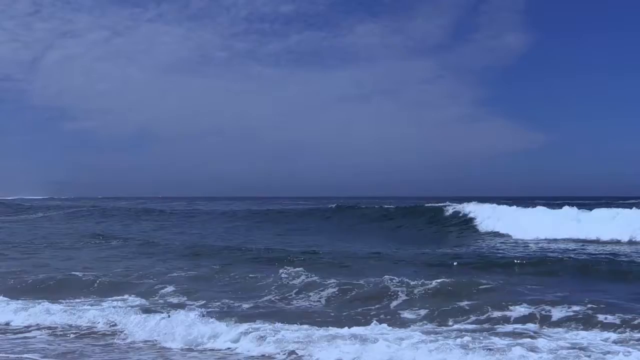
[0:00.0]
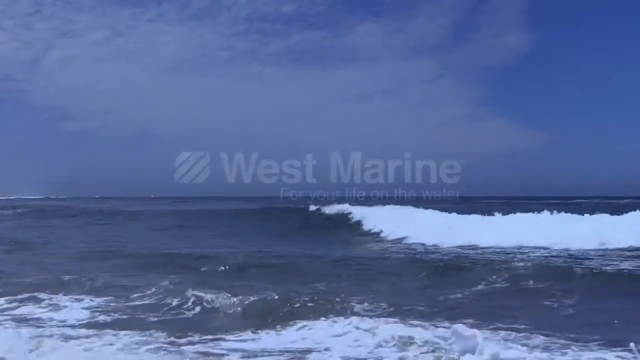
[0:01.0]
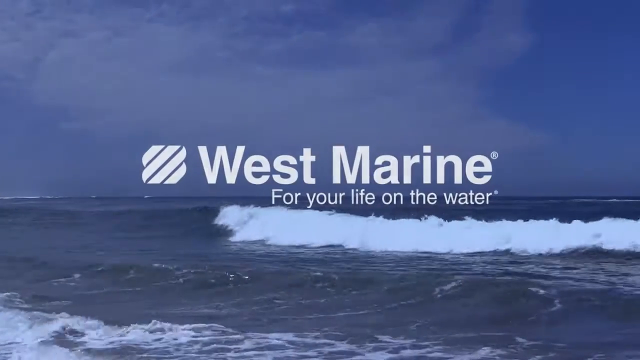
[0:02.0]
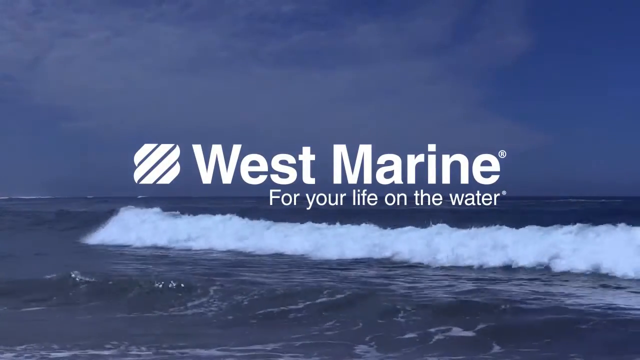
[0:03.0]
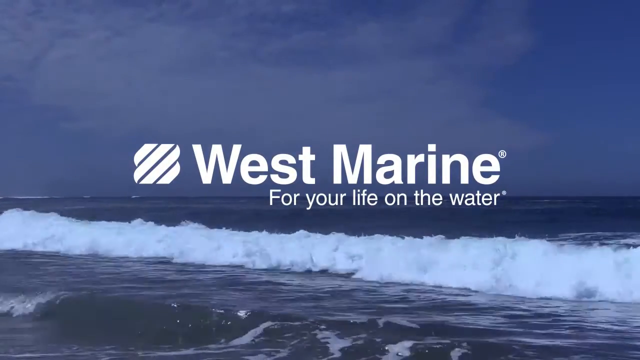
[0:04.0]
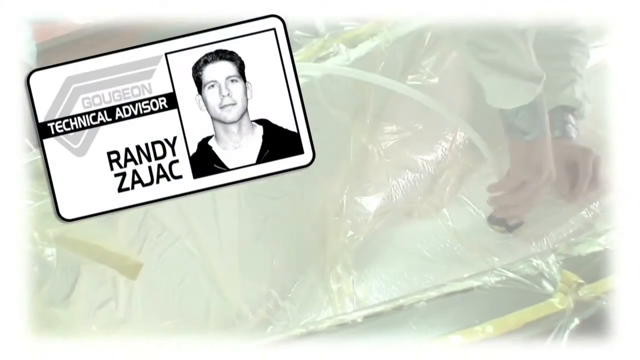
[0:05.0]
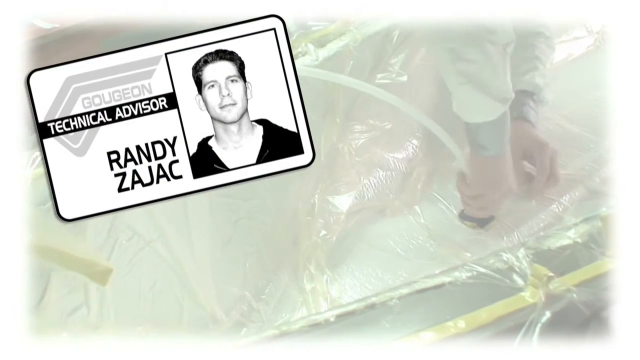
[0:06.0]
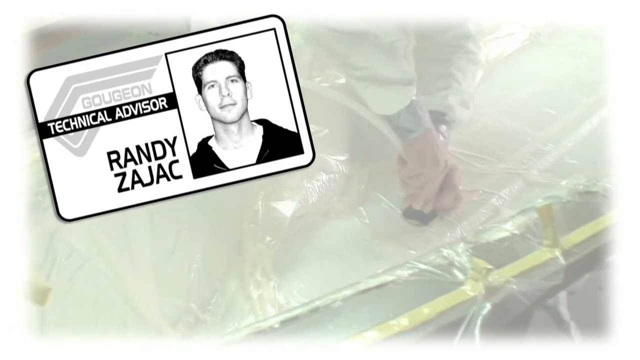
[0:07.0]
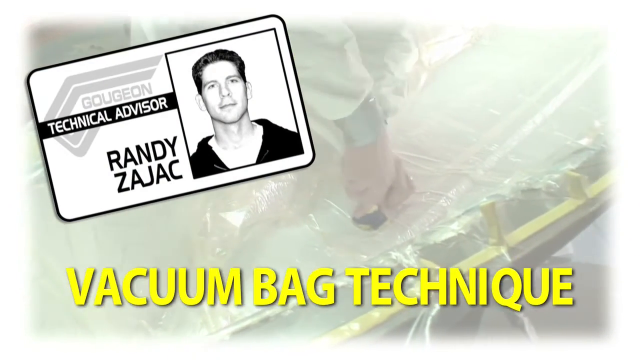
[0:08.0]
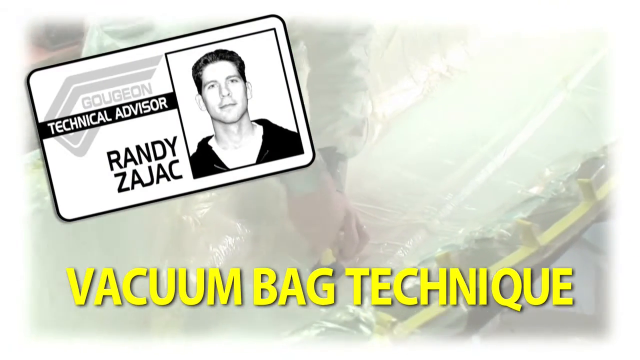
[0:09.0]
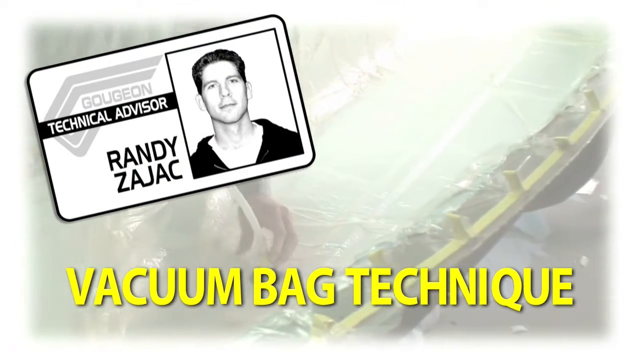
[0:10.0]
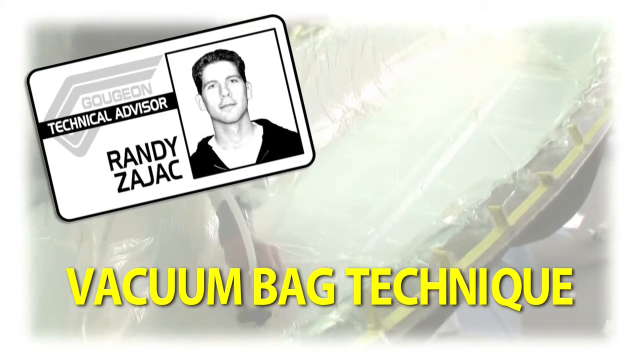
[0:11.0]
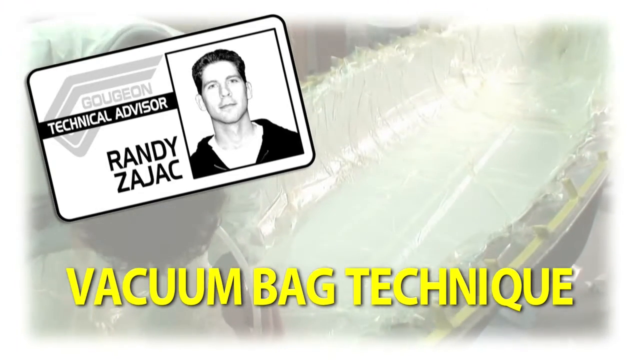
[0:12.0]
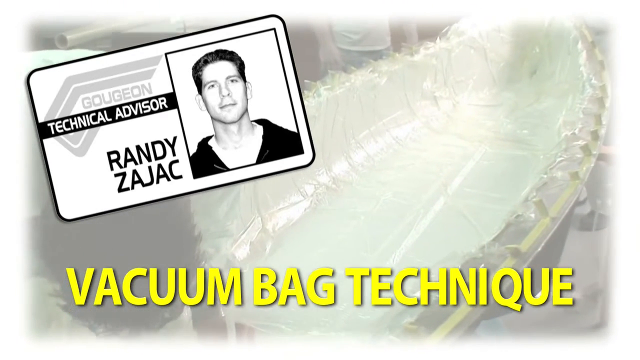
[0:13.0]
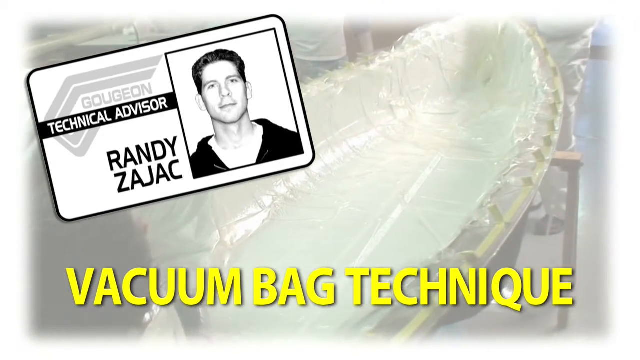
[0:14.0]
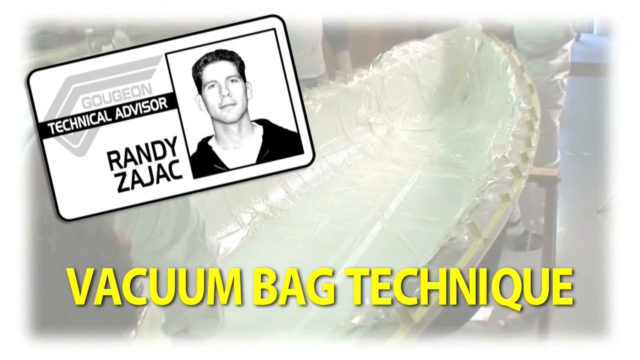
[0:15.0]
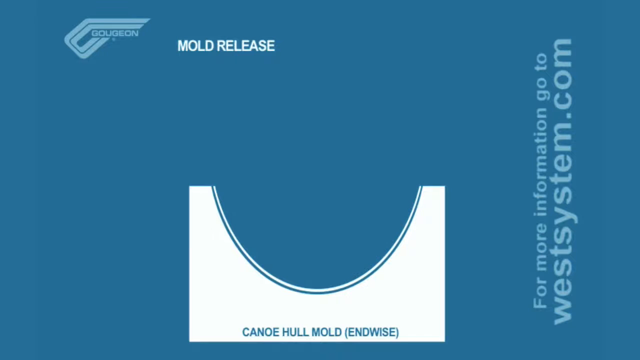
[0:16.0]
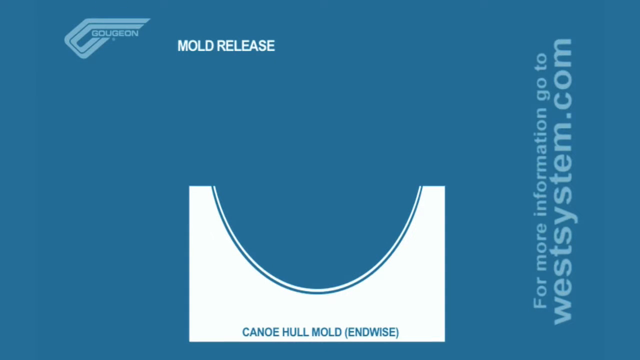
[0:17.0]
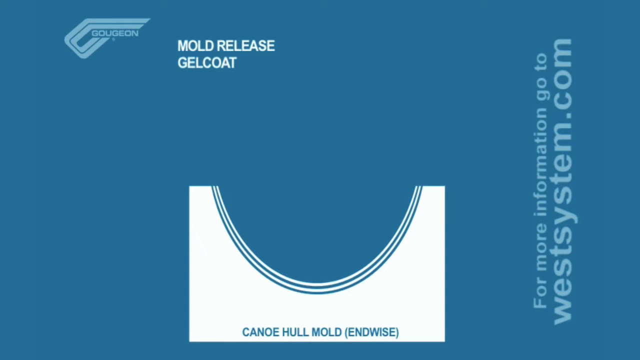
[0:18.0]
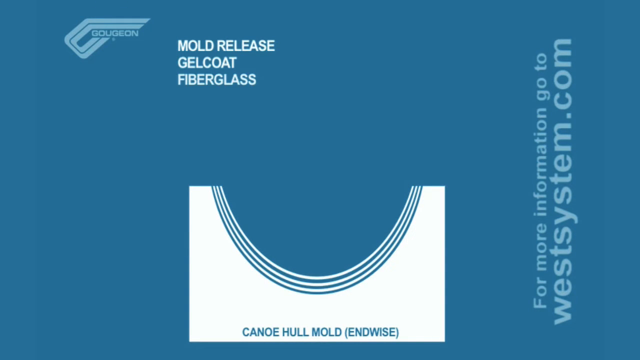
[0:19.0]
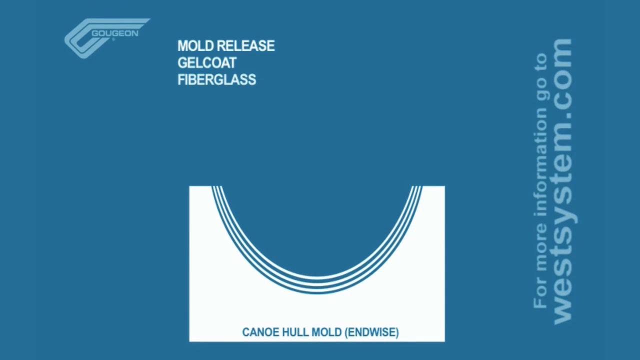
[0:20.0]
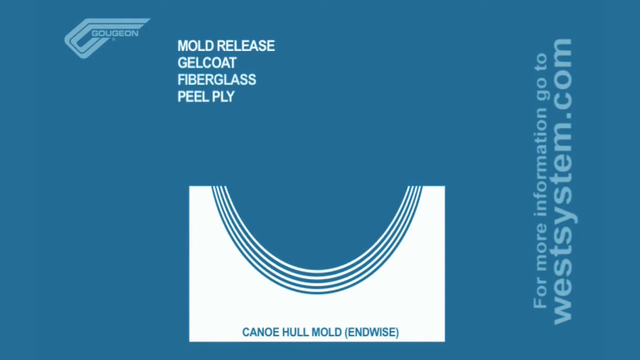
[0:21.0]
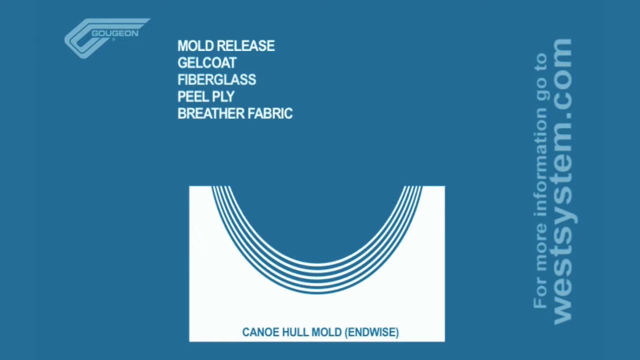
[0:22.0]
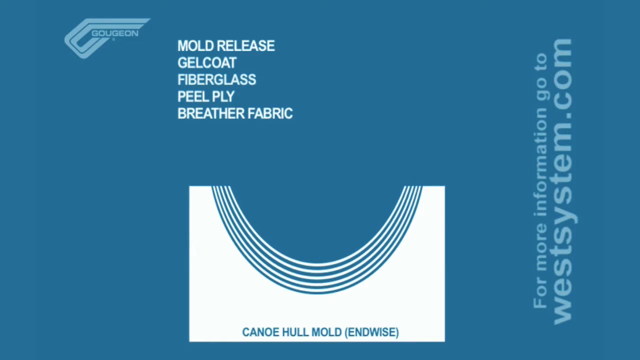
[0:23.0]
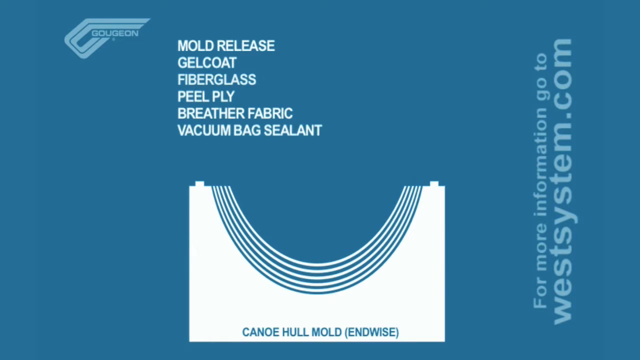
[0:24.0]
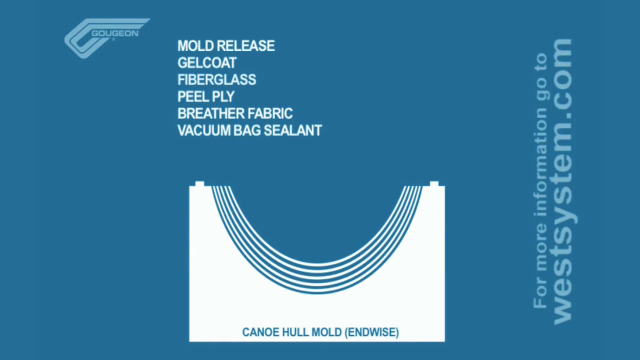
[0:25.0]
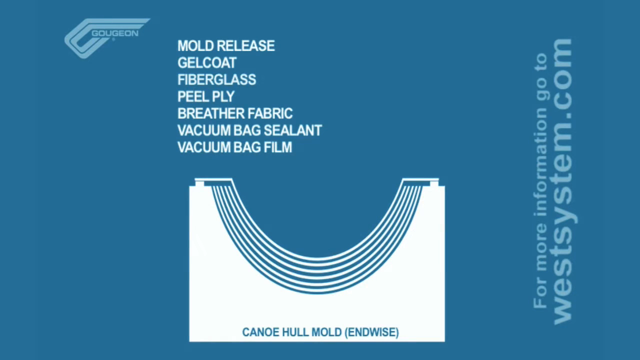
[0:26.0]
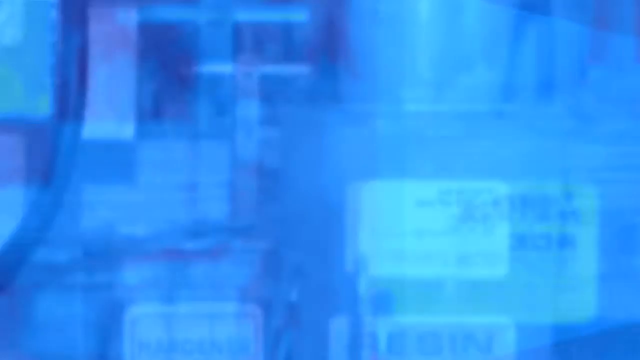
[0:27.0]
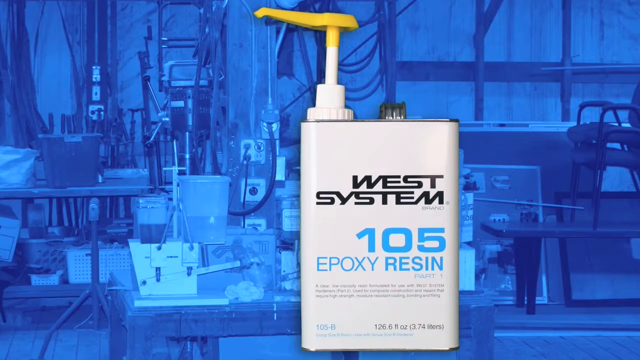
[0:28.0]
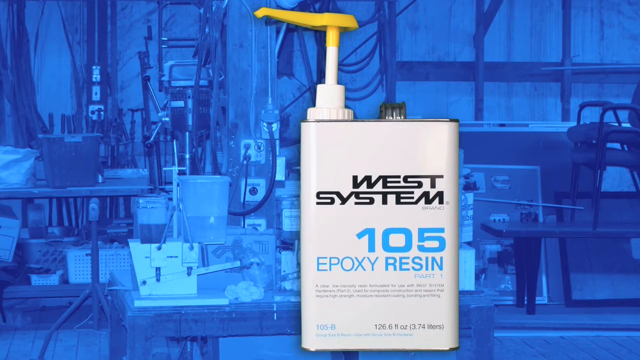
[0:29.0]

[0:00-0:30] The video opens on a view of an oceanfront with several waves moving from right to left. In the middle are the words "West Marine for your life on the water" in white. Next to them is a logo of slanted lines in a squared frame shape. A picture ID then appears of a man posing for a picture, wearing a white shirt and a black hoodie; next to his picture it says "Technical Advisor Randy Zajac". In the background someone is screwing something into an object, and underneath are the words "vacuum bag technique" in yellow. A blue screen follows with several words on it, including "mold release", "gel coat" and "fiberglass", along with "For more information go to westsystem.com". In the middle bottom of the screen are also the words "canoe, hole, mold" surrounded by white lines.